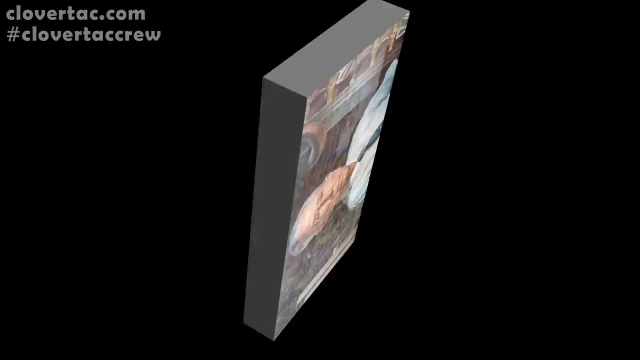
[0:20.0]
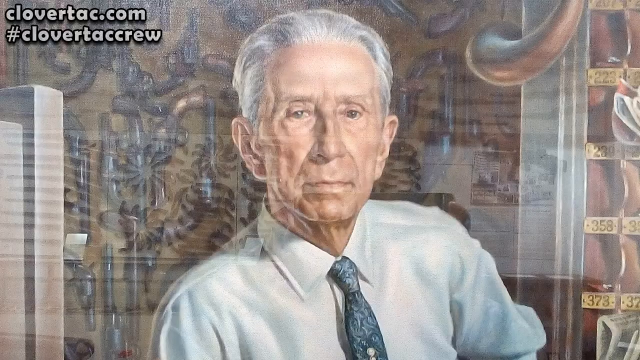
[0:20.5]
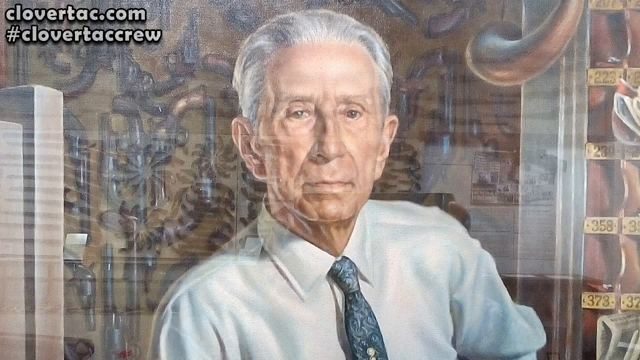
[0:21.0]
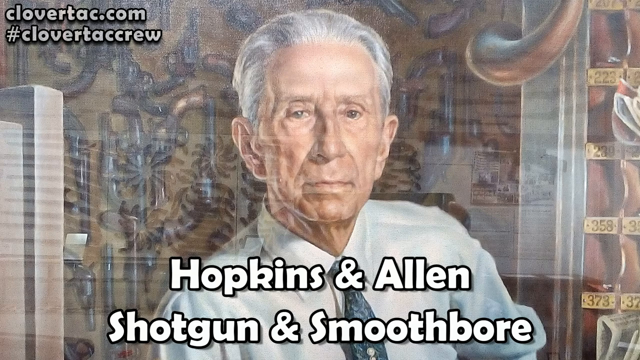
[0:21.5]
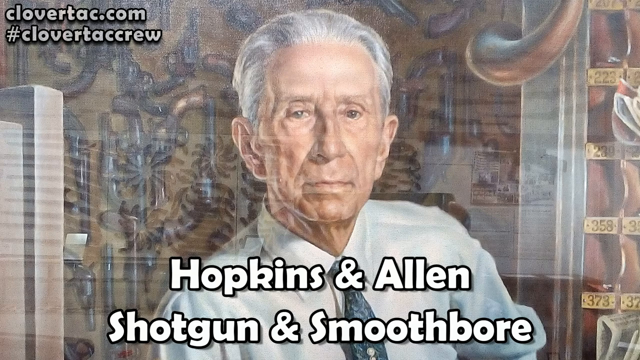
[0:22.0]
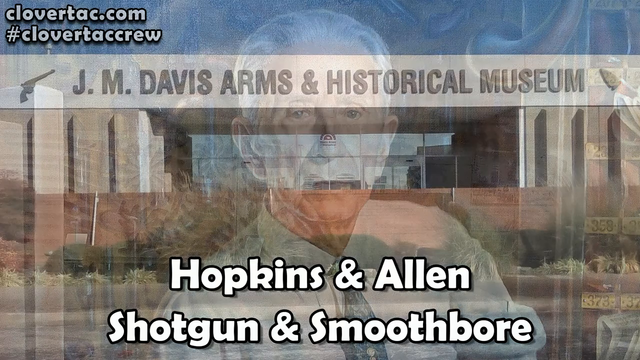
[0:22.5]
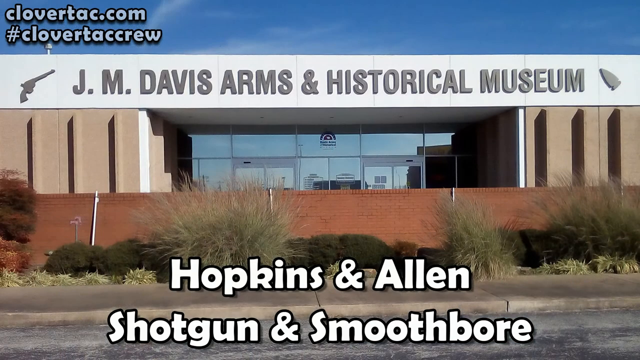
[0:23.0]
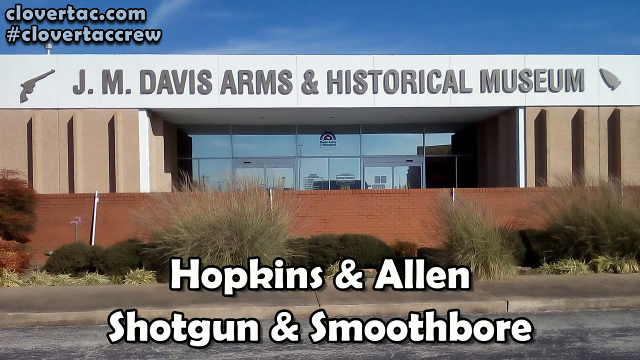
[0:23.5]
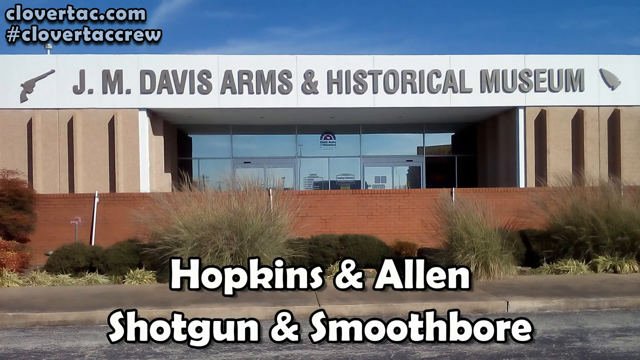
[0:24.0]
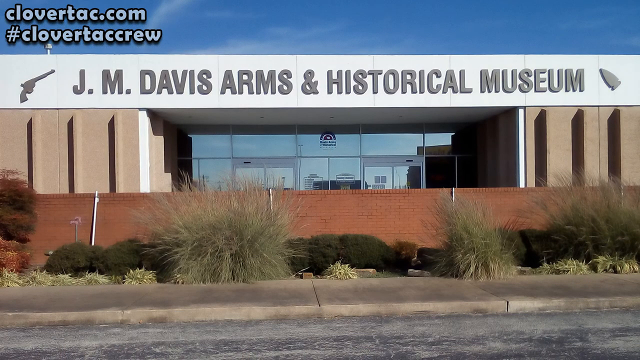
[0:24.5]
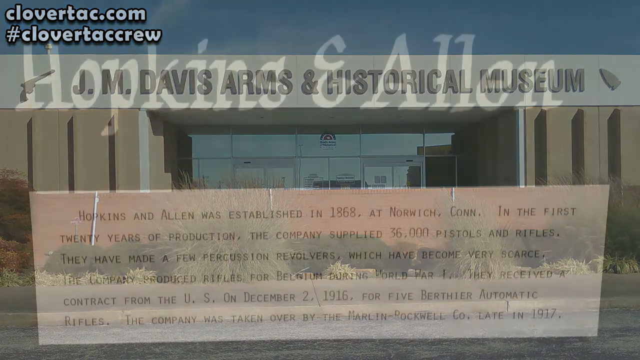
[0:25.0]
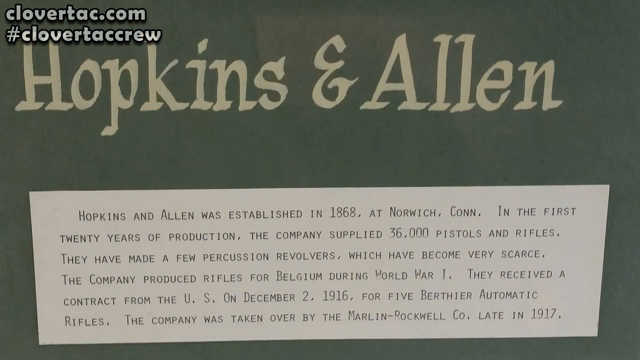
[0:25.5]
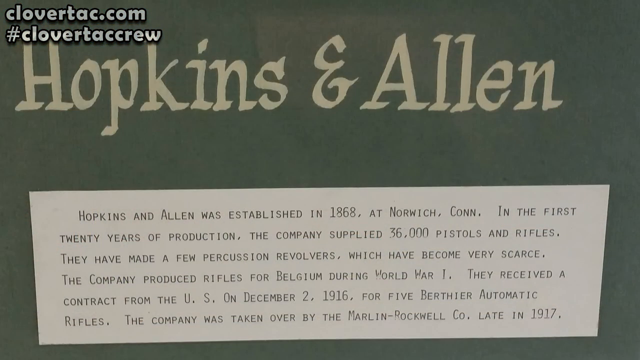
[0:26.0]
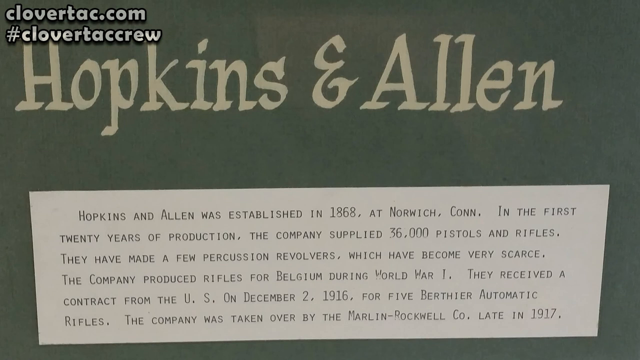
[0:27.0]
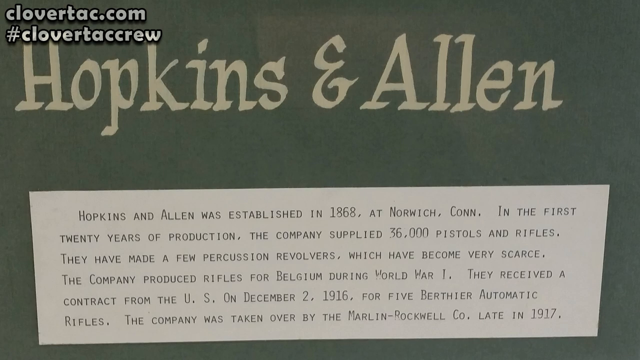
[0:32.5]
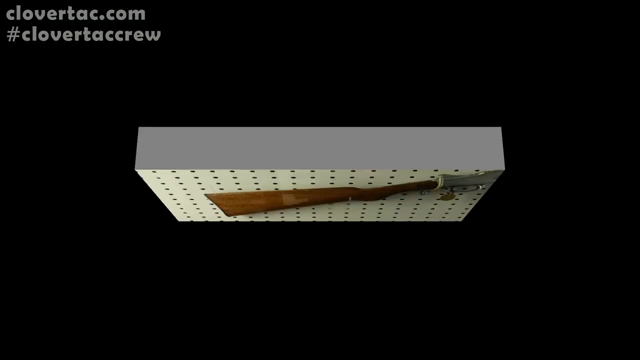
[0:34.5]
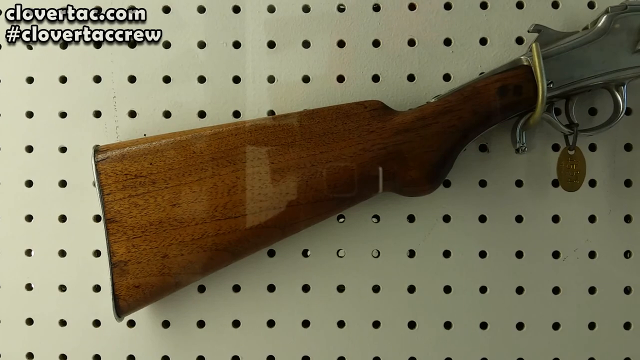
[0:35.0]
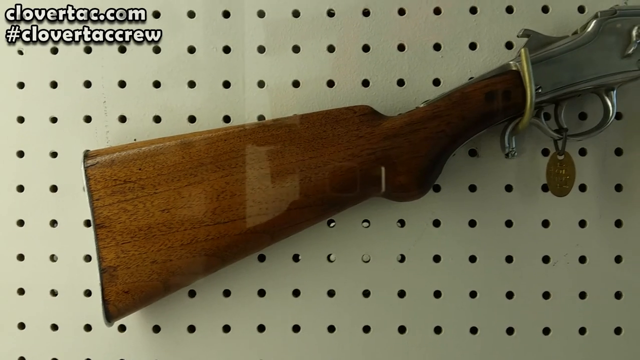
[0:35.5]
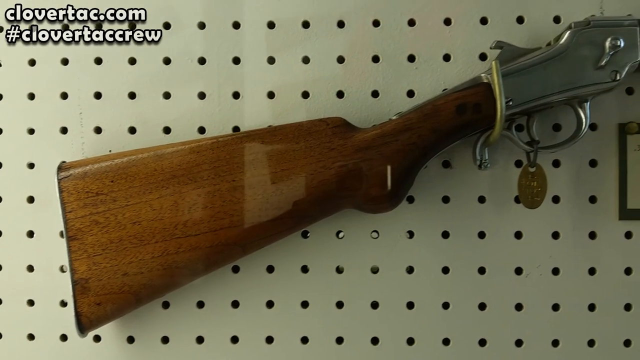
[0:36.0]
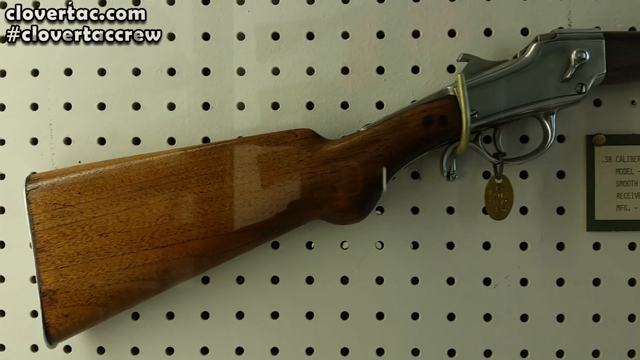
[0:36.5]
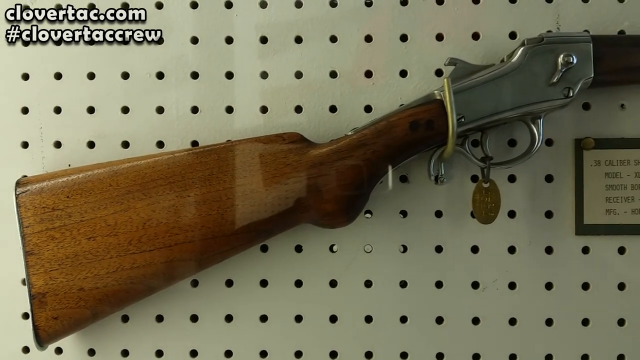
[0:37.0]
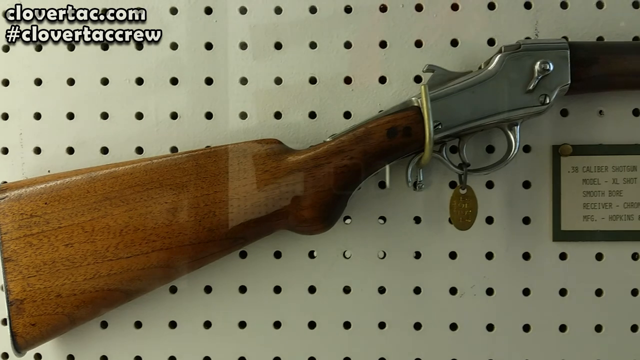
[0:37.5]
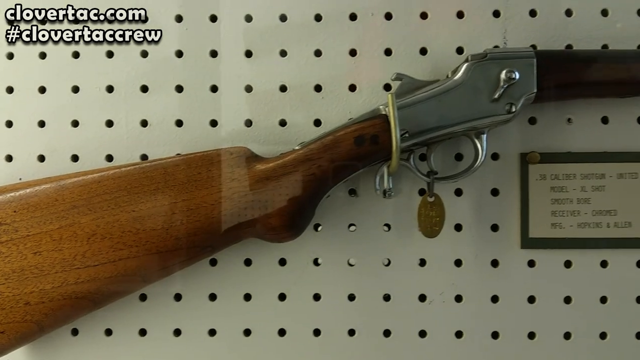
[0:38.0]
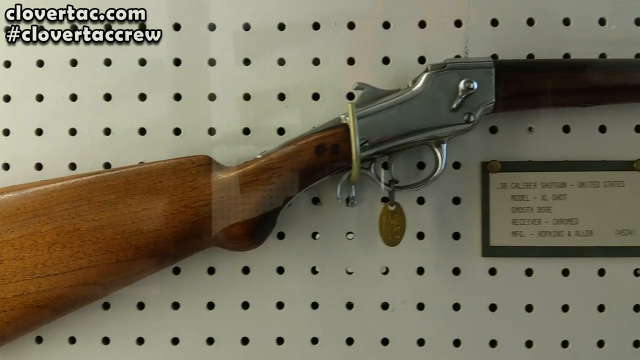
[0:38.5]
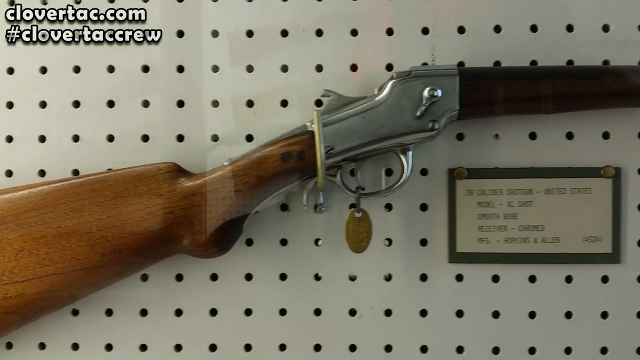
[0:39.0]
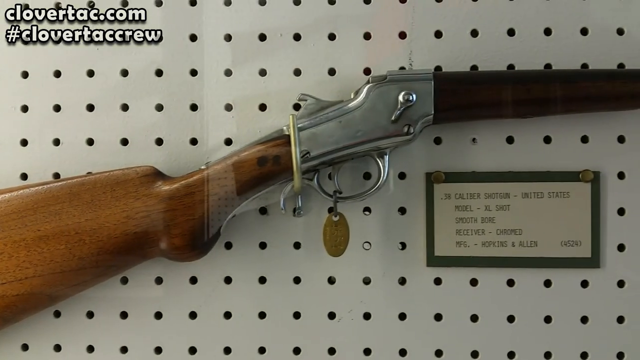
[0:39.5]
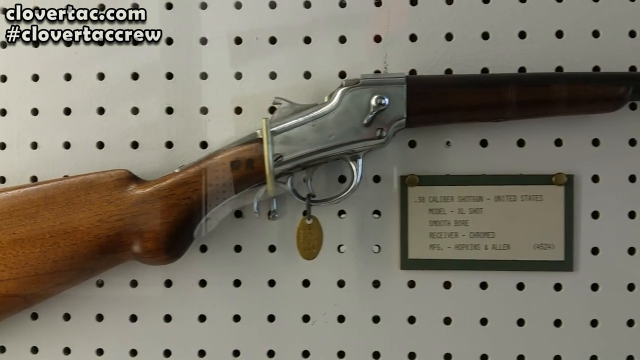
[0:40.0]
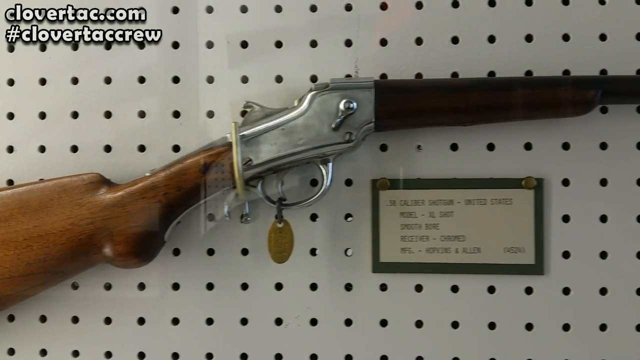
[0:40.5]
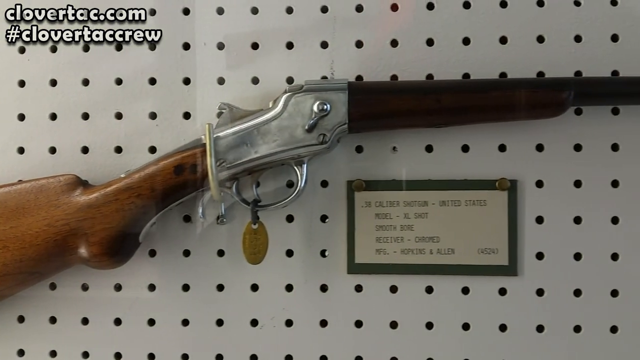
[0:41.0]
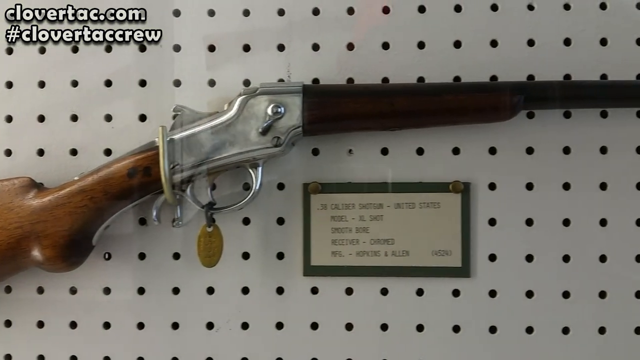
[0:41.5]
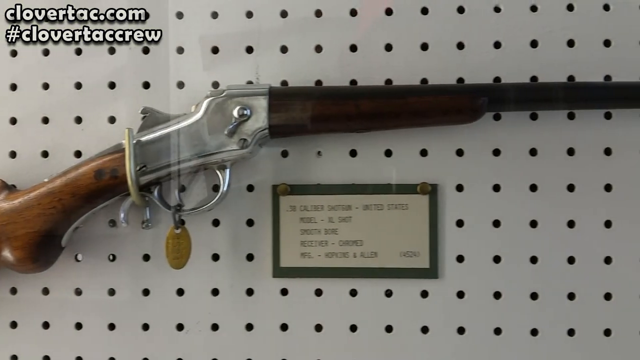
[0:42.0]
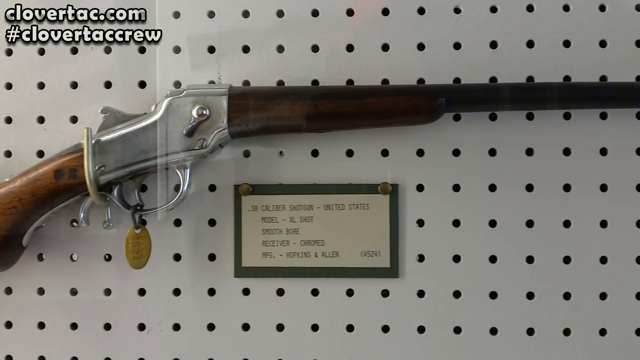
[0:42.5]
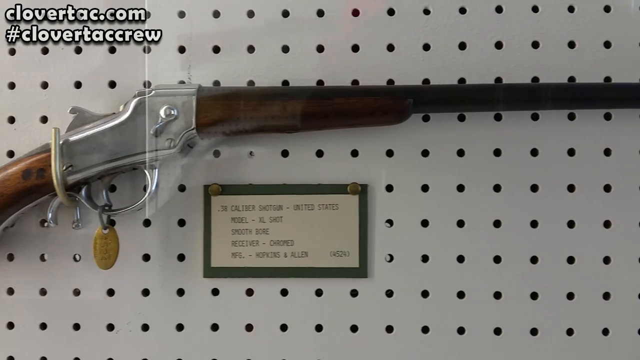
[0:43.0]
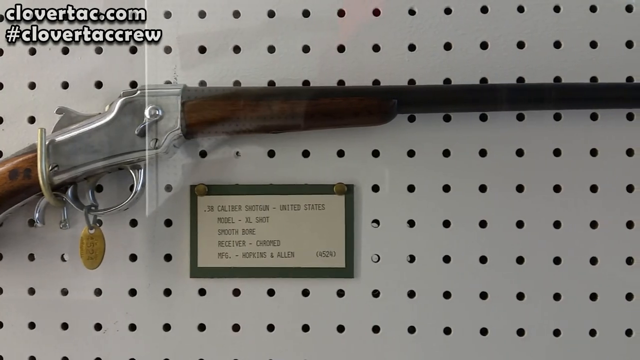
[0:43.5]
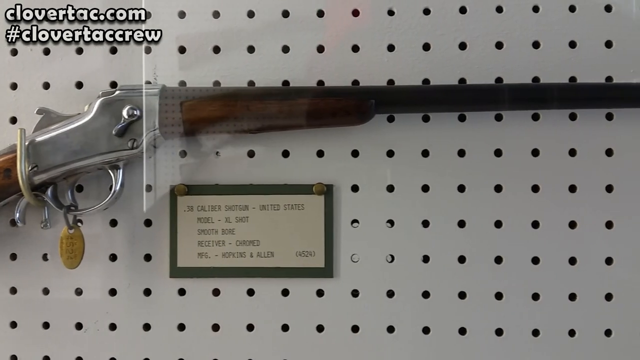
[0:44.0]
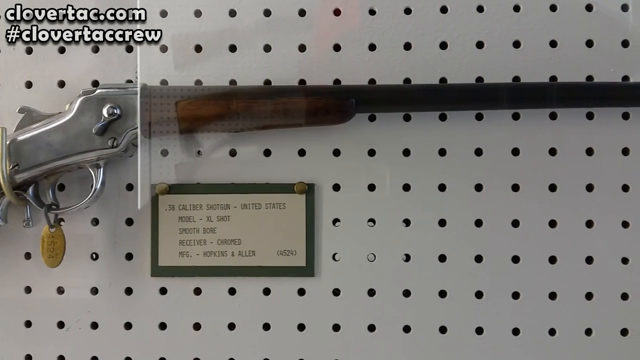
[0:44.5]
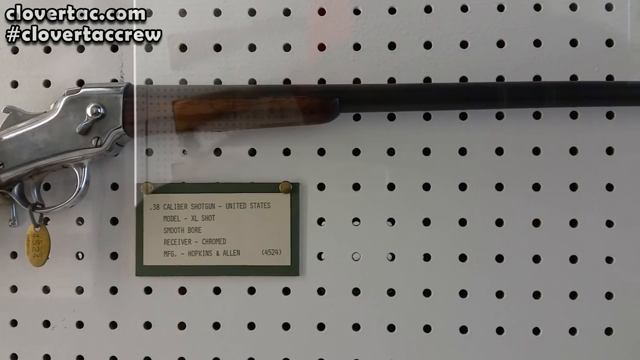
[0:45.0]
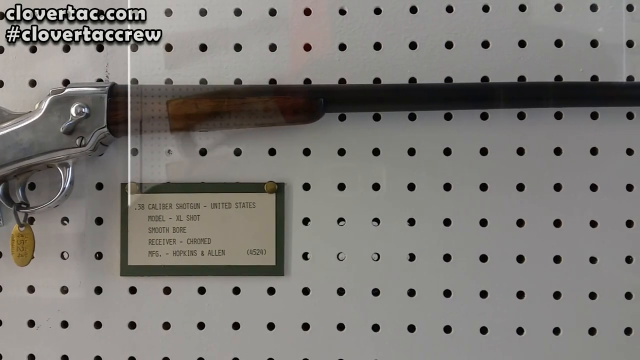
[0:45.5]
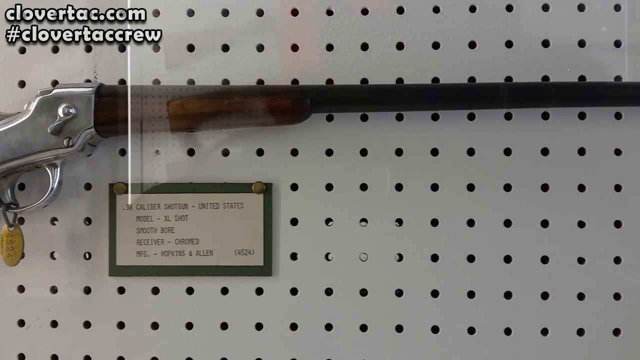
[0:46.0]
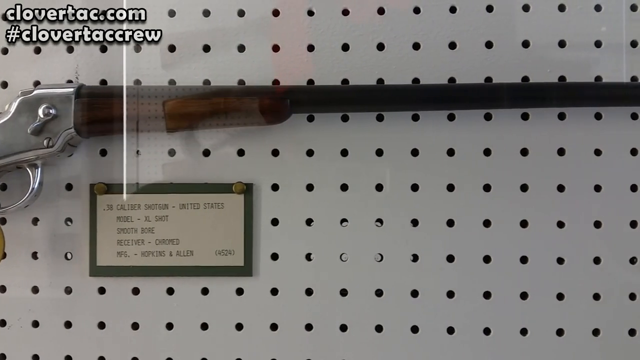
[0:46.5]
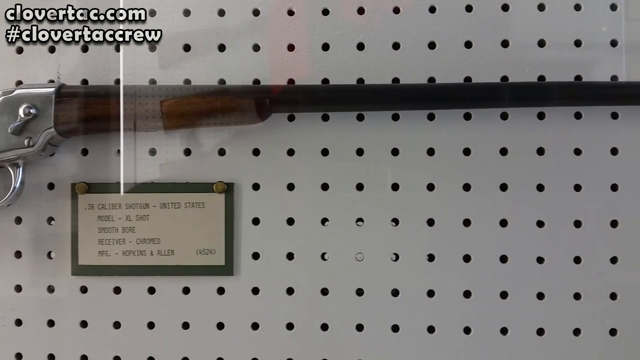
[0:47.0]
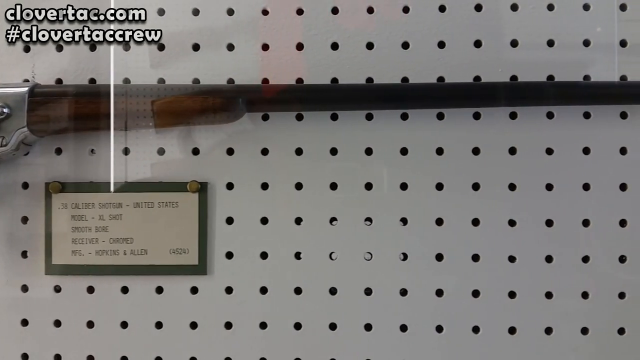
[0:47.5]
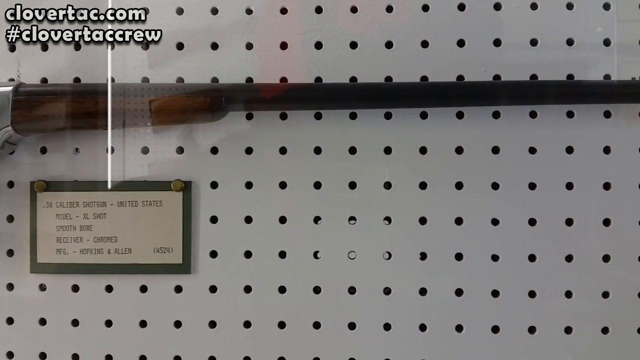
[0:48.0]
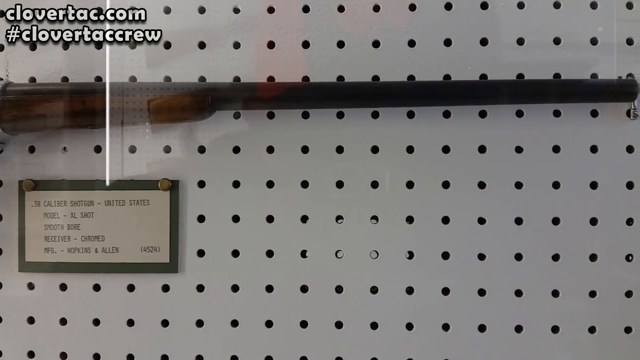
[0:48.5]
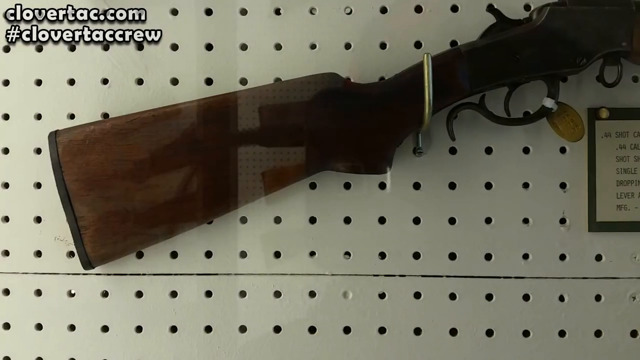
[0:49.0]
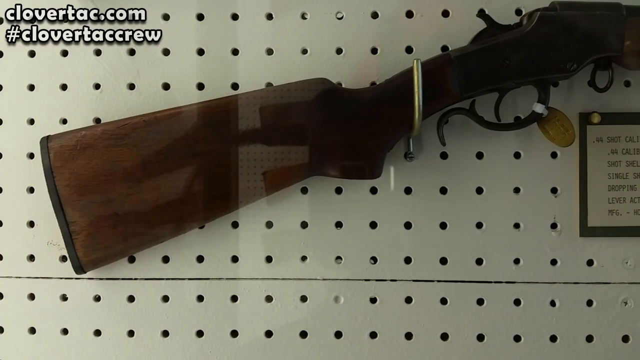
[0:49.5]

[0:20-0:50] An older gentleman's animated face appears with the text "Hopkins and Allen shotgun and smoothbore." Text reading "J.M. Davis Arms and Historical Museum" appears with a revolver logo to its left, and the outside of the building is shown. The next scene says "Hopkins and Allen" with a paragraph below, which looks like part of a memorial sign. The barrel of a shotgun comes into view, and the camera moves to the right to show the rest of the shotgun, seen from a side view hanging up on a wall, with a sign under it to the right. The wall is white with rows of small black circles on it. Another shotgun follows, with only its barrel visible as the shot ends.